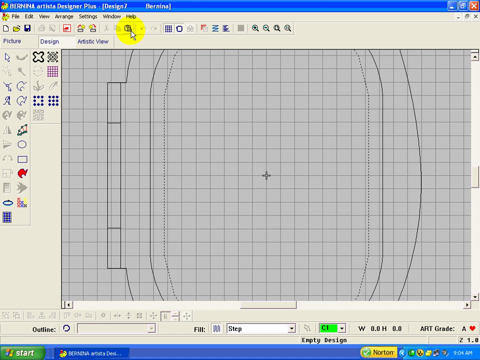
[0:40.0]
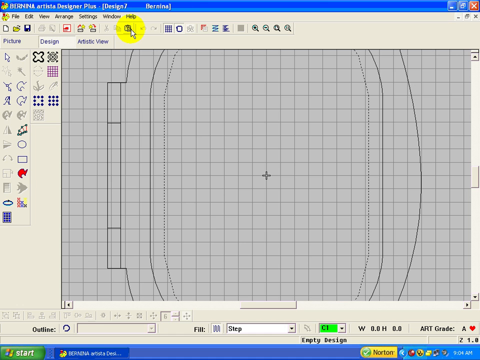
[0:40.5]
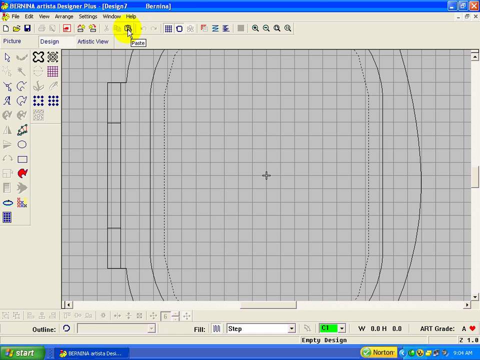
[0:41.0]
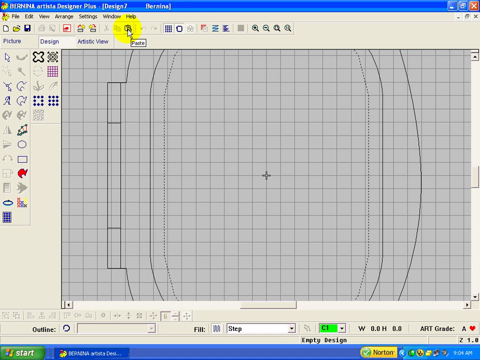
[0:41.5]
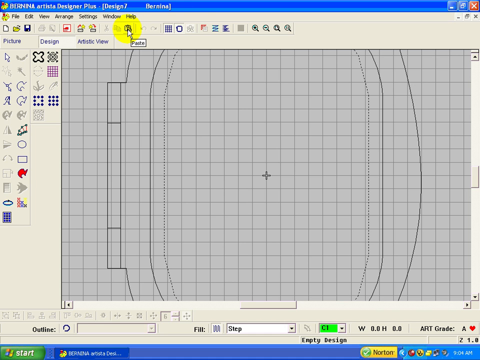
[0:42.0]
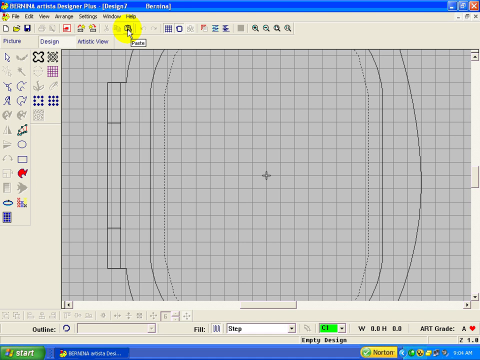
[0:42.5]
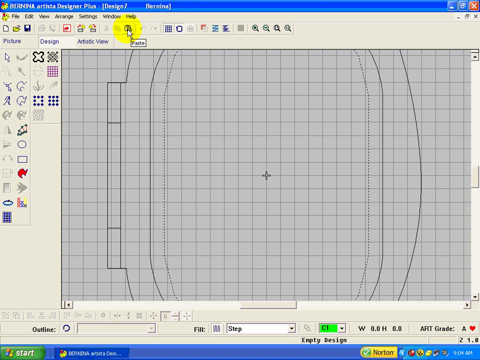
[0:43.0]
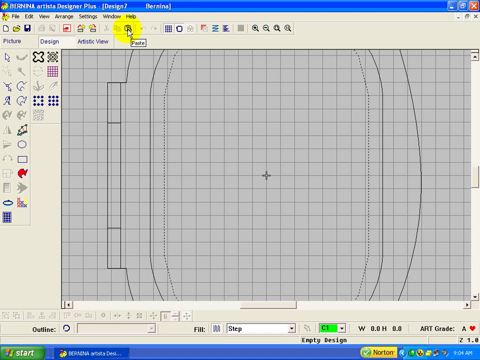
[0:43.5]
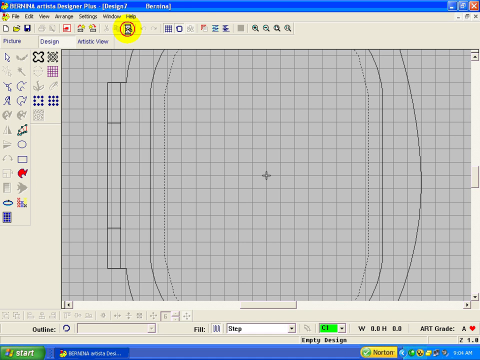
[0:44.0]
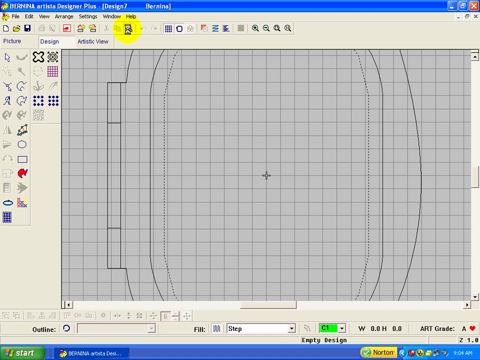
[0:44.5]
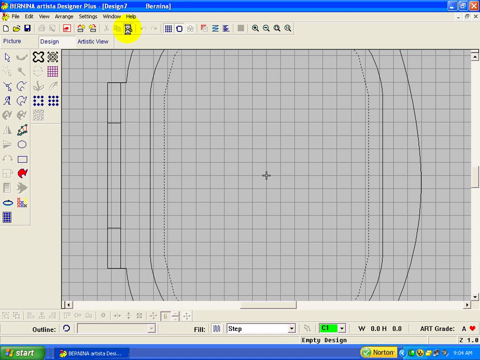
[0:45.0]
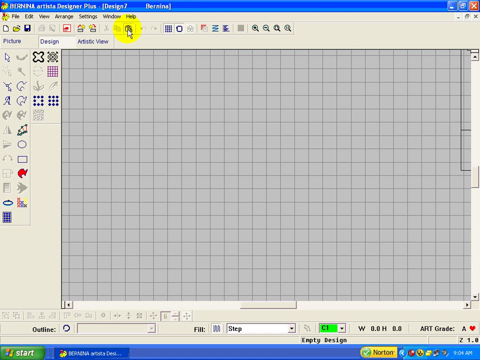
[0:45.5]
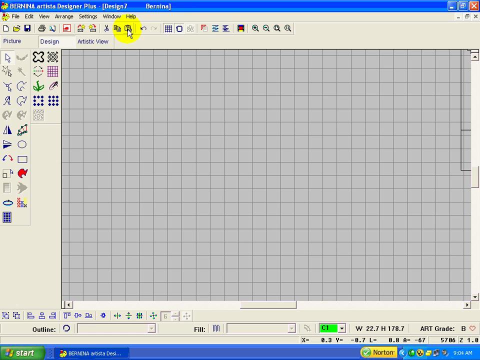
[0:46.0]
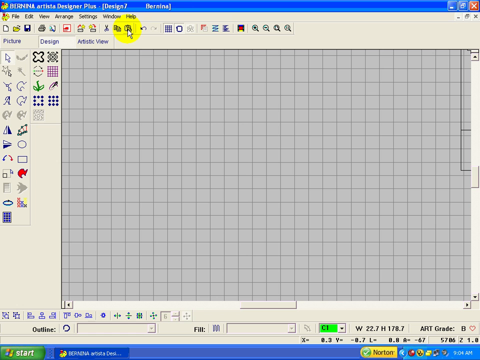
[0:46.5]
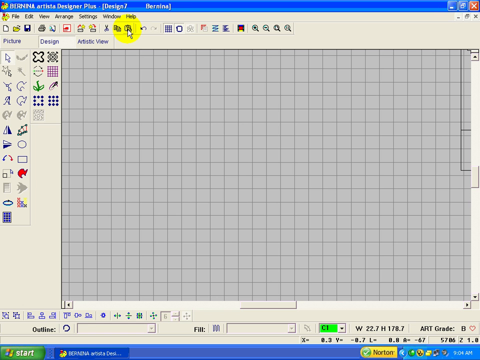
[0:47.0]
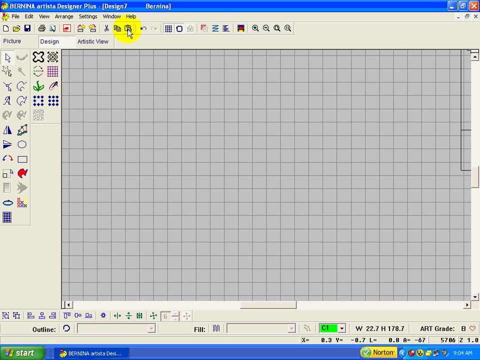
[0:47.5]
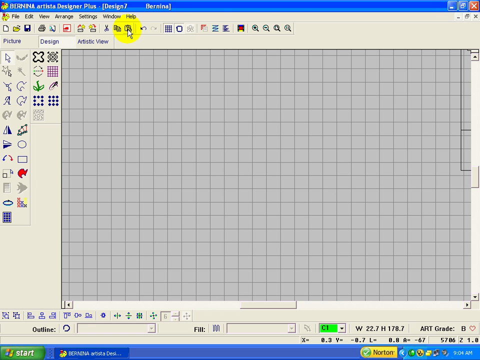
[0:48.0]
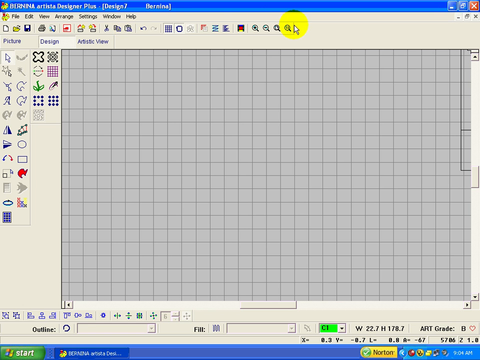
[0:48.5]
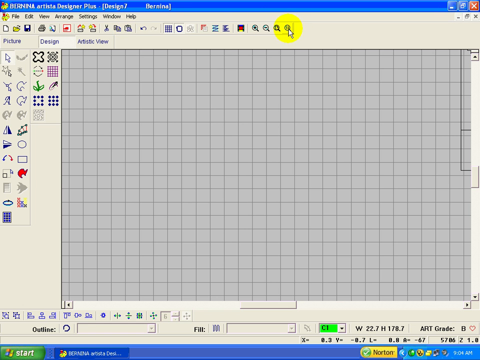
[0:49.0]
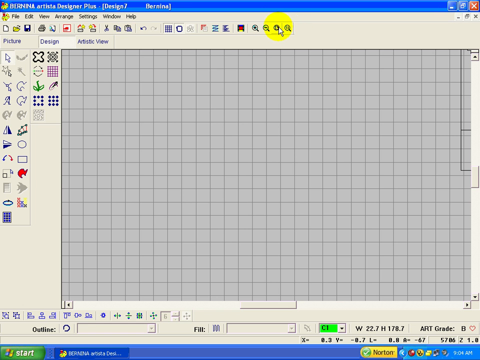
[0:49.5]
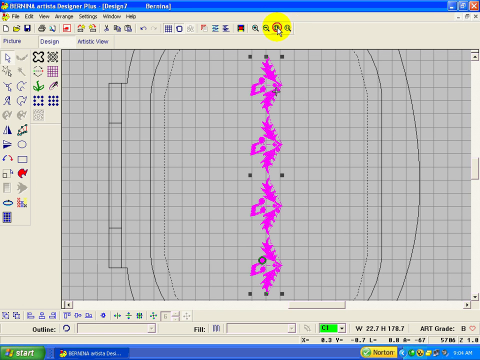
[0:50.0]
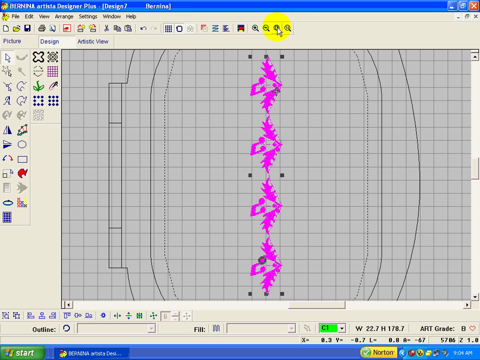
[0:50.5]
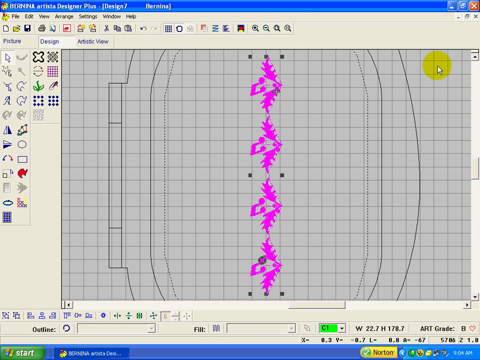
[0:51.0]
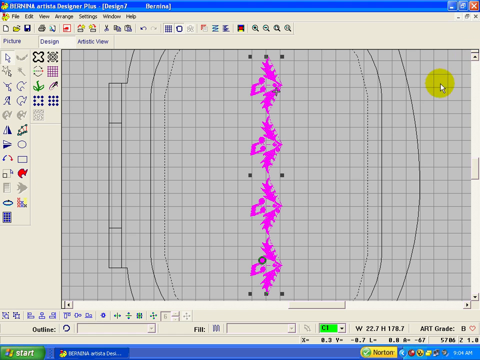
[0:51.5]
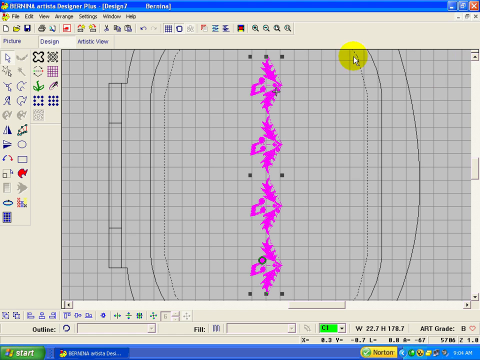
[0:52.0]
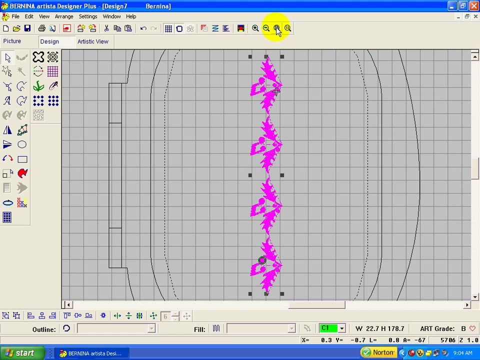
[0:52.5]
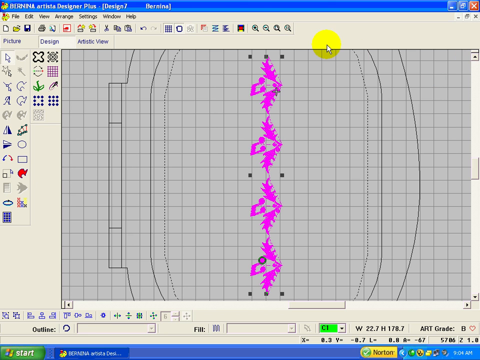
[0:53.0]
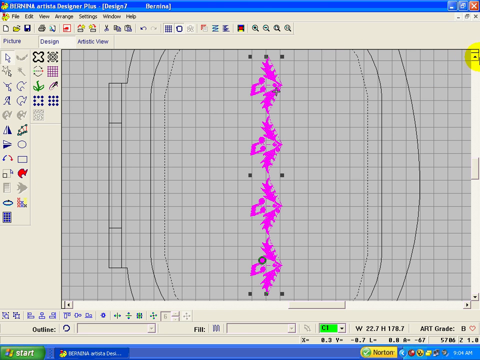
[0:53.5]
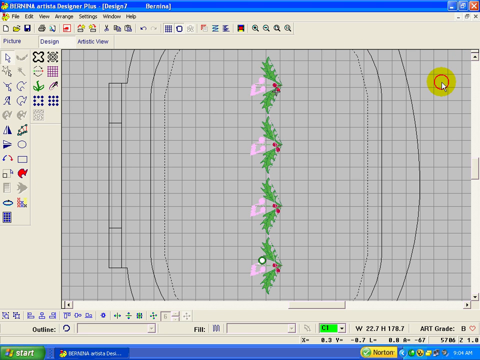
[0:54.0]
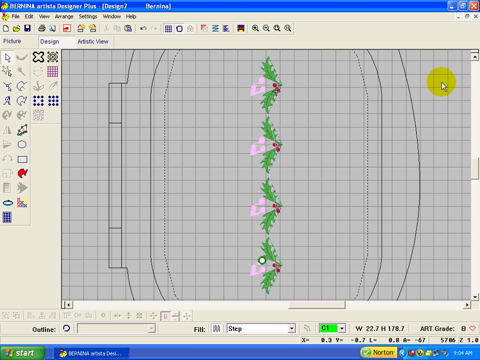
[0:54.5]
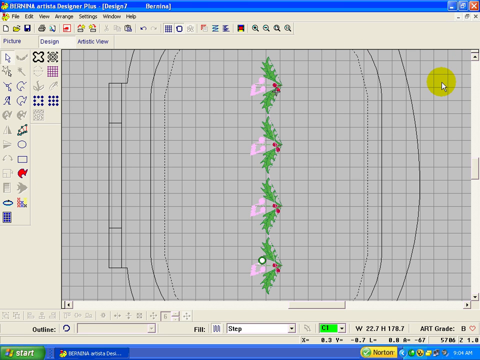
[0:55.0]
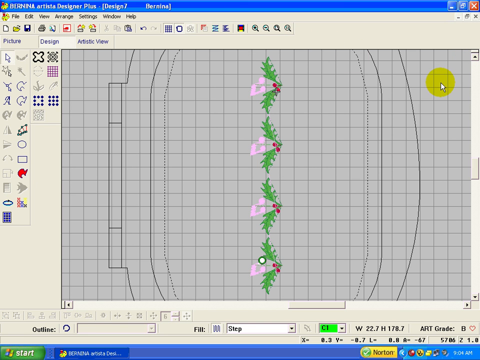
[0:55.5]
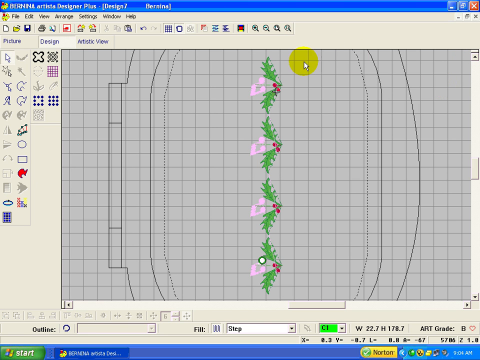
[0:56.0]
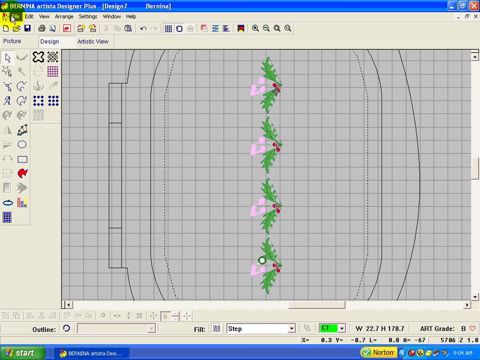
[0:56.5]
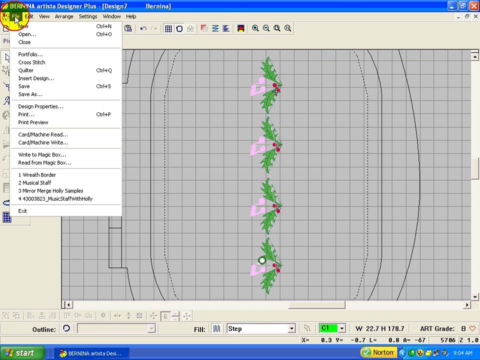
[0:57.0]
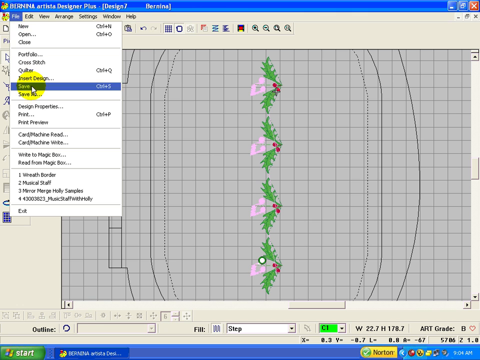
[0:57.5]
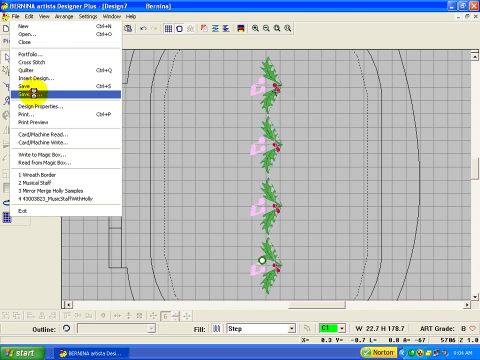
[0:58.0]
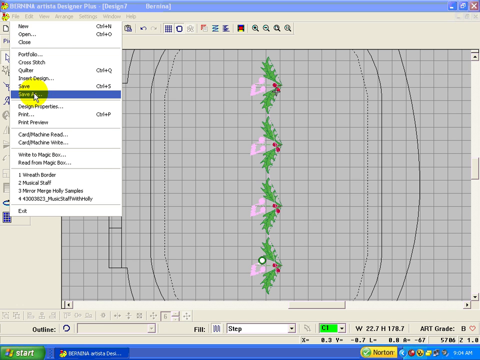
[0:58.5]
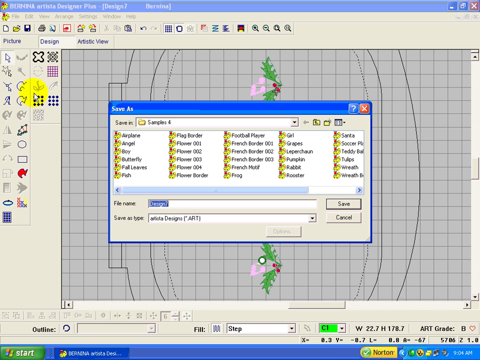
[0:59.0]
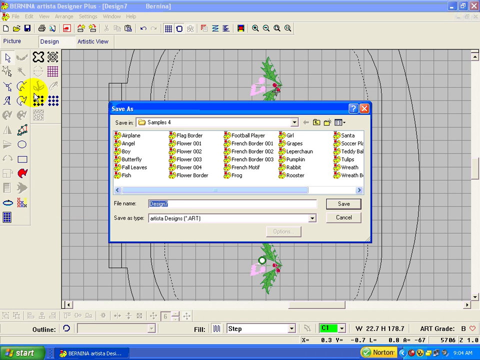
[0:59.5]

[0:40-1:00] The outline does not line up perfectly with the grid, and some sort of cursor in its center marks the outline's exact center. The mouse cursor moves to the paste button at the very top, and while it hovers there the word "paste" appears in very tiny letters. When the button is clicked, the computer buffers and the time icon appears until the outline on the grid disappears. The cursor then moves to the right and hovers over the zoom and zoom out tool. After it clicks something, the four magenta-highlighted leaf decorations appear in the very center of the graph, along with the outline. The cursor clicks elsewhere on the graph, and the decorations lose their highlight and return to their original colors. The mouse then goes to the top left and clicks File. A menu pops up, and the cursor goes down to Save As and clicks it. The computer takes time to load, and then a window pops up in the very center of the screen.